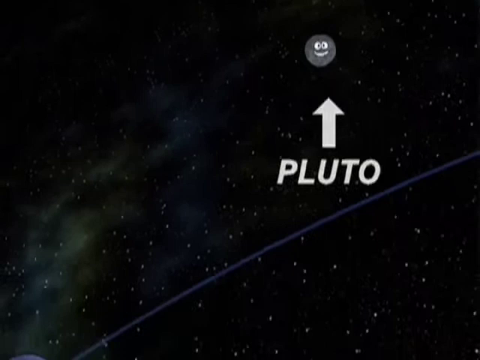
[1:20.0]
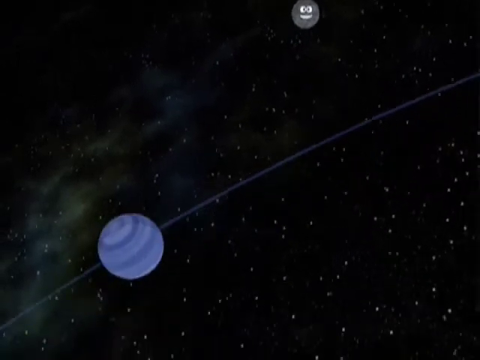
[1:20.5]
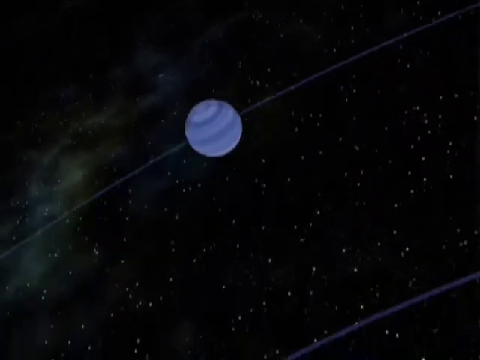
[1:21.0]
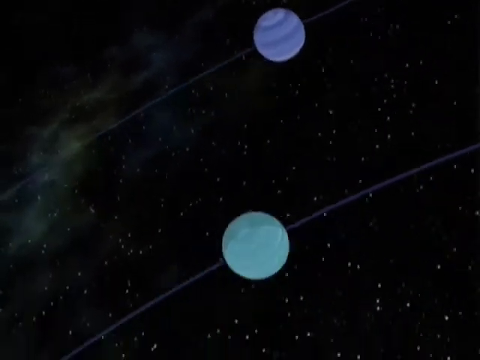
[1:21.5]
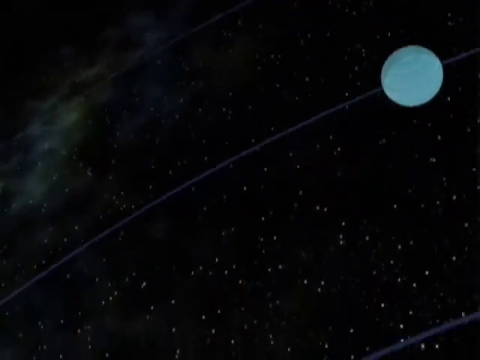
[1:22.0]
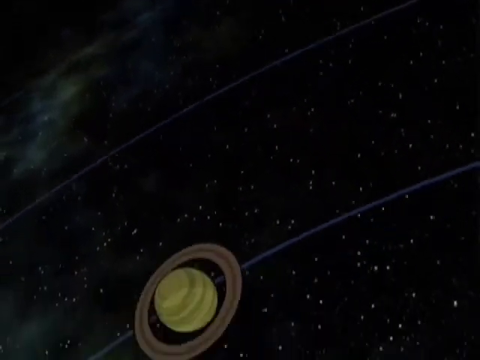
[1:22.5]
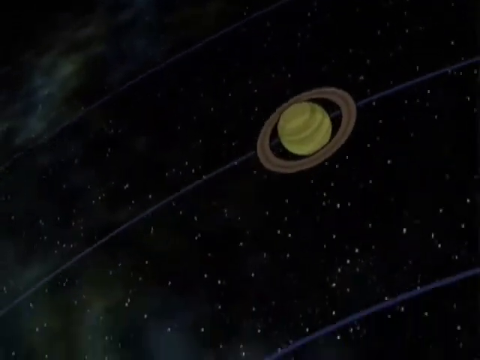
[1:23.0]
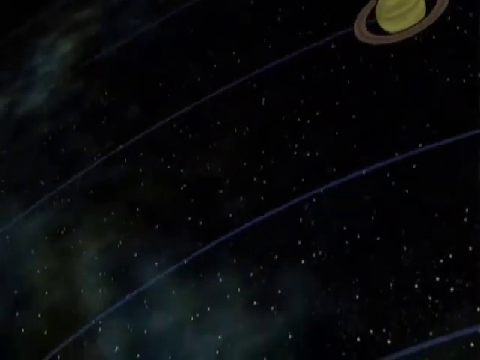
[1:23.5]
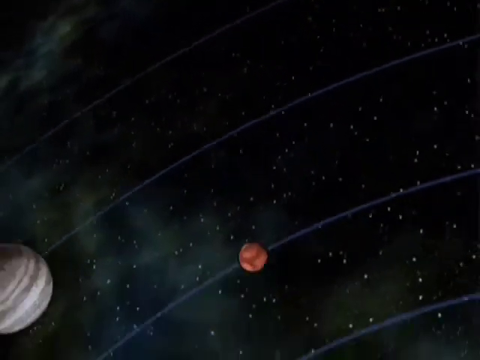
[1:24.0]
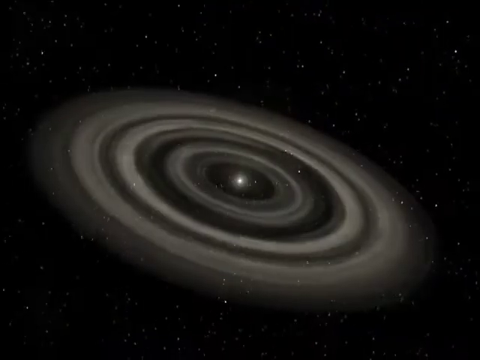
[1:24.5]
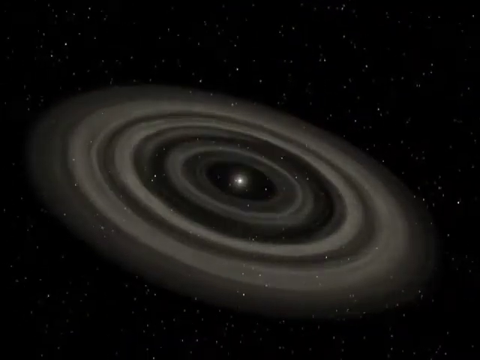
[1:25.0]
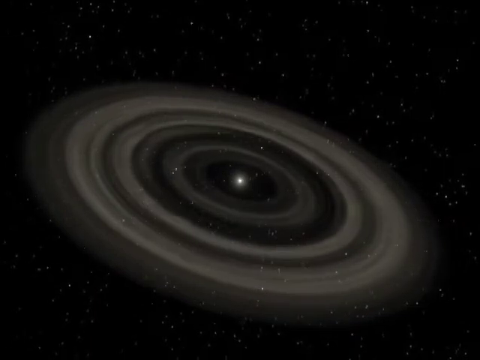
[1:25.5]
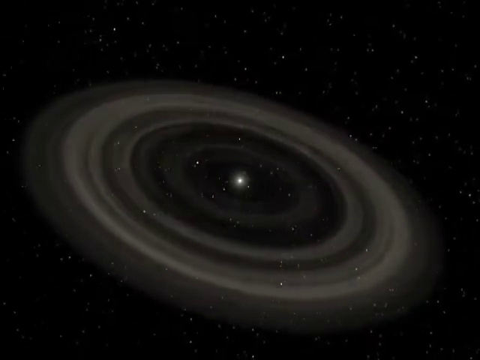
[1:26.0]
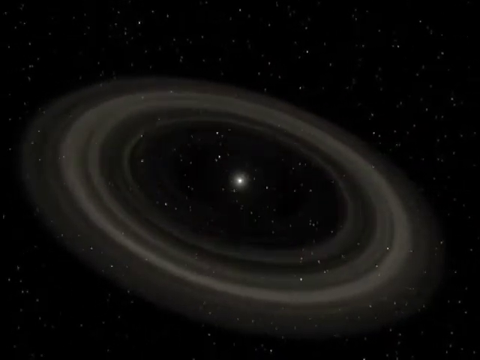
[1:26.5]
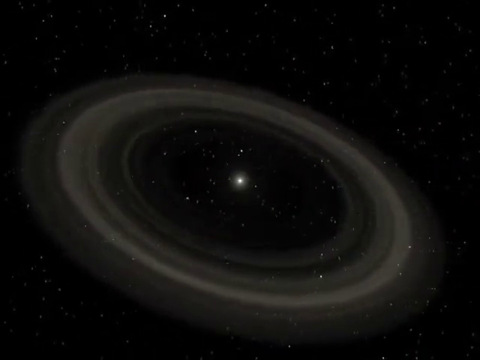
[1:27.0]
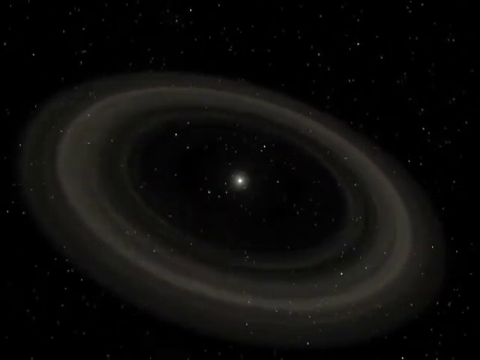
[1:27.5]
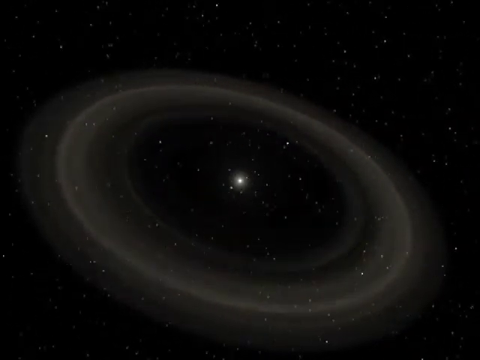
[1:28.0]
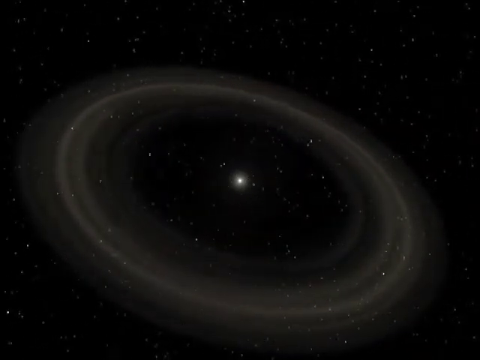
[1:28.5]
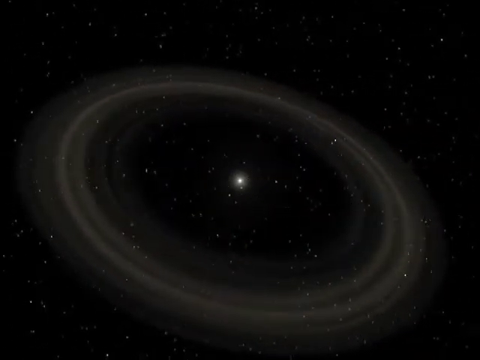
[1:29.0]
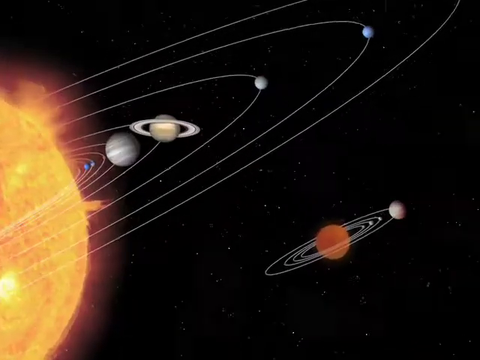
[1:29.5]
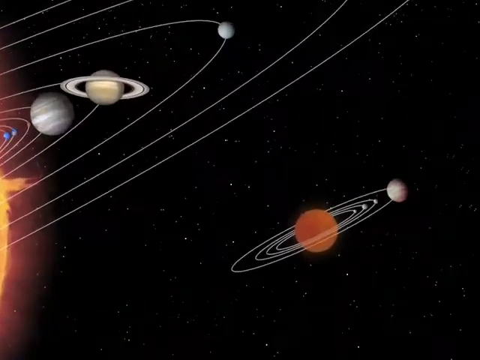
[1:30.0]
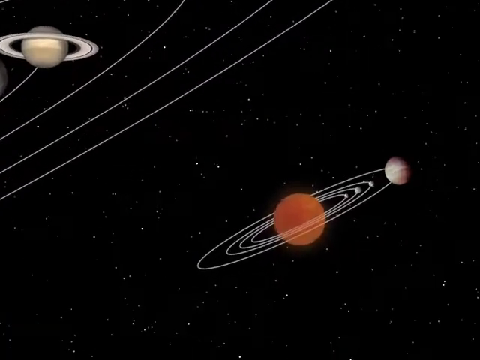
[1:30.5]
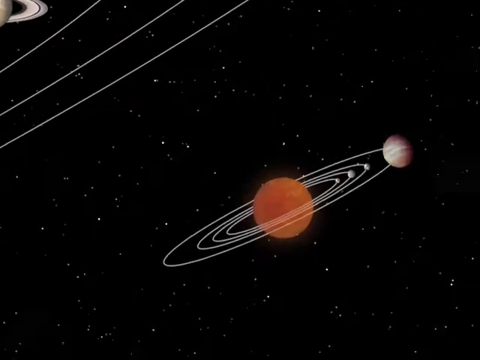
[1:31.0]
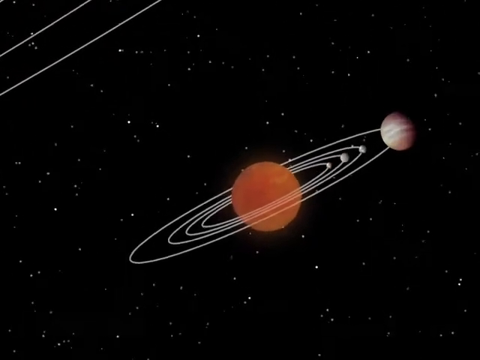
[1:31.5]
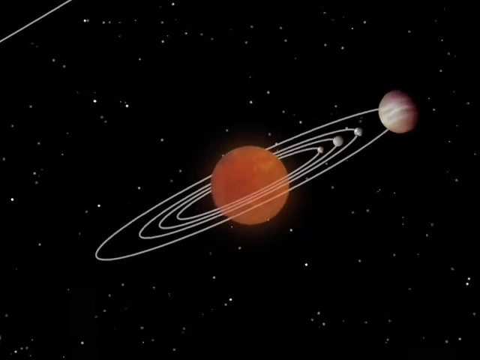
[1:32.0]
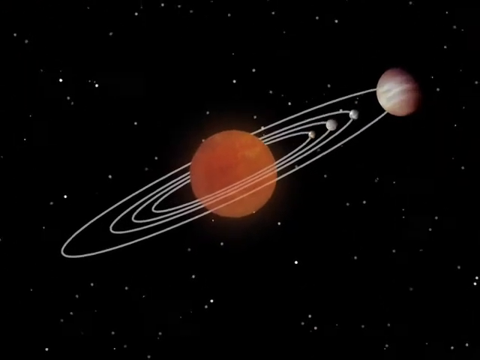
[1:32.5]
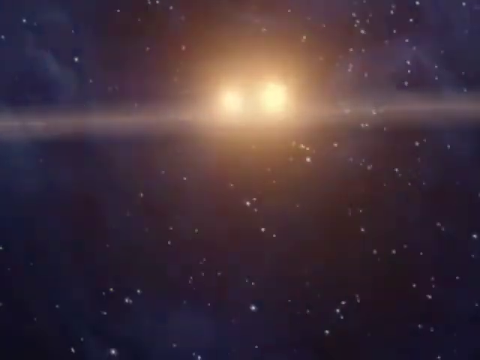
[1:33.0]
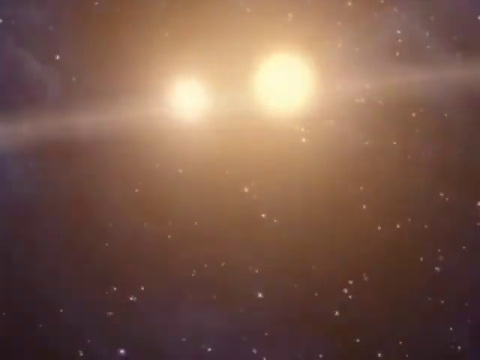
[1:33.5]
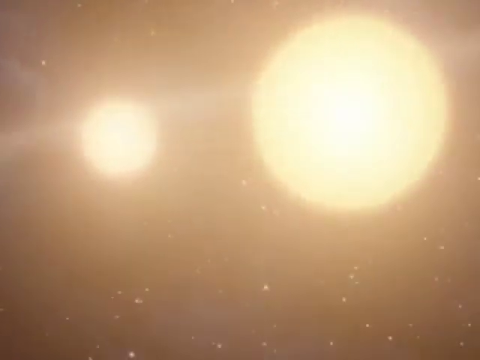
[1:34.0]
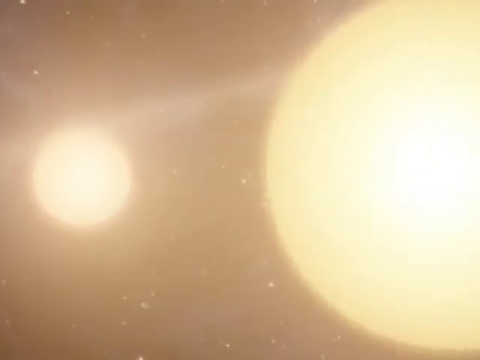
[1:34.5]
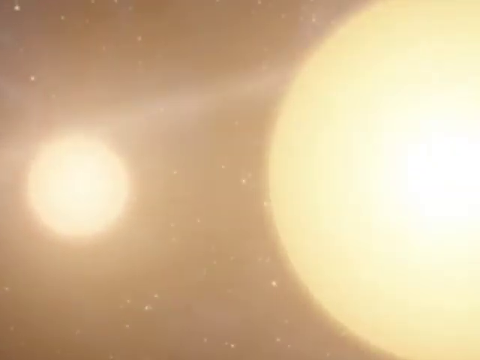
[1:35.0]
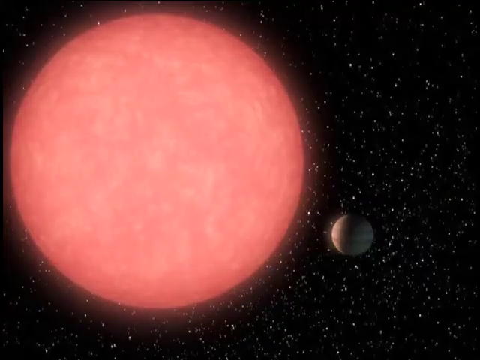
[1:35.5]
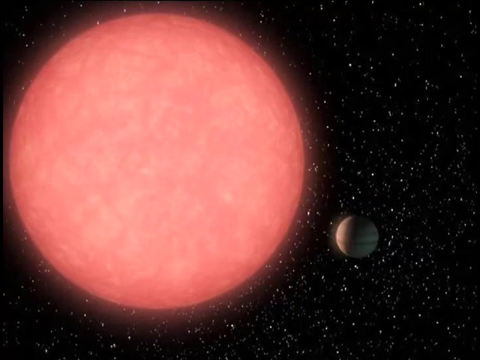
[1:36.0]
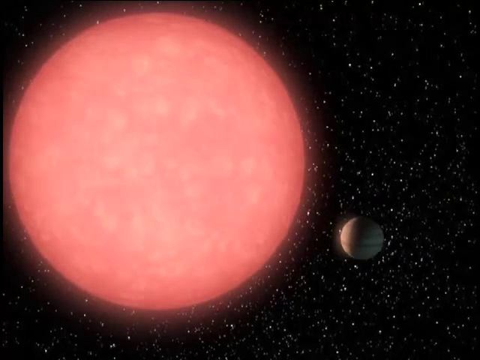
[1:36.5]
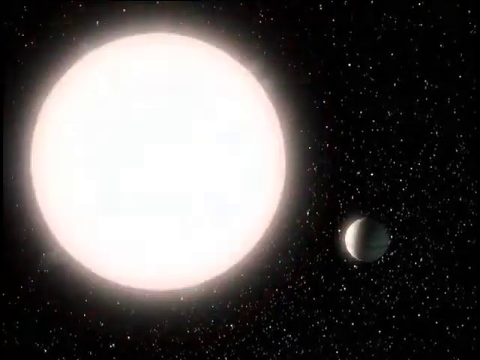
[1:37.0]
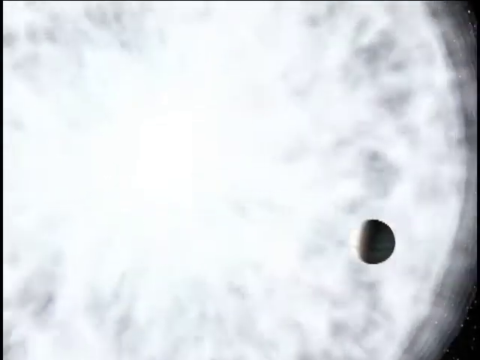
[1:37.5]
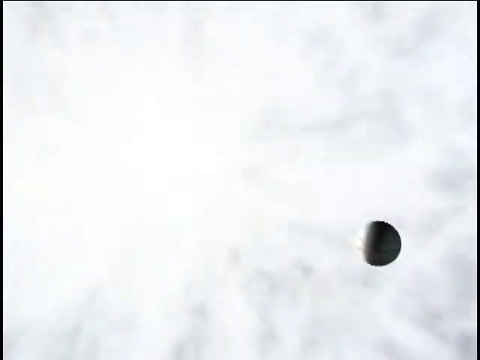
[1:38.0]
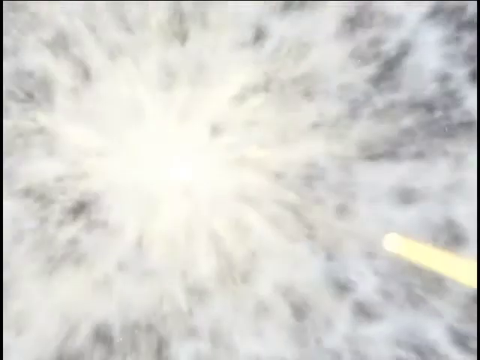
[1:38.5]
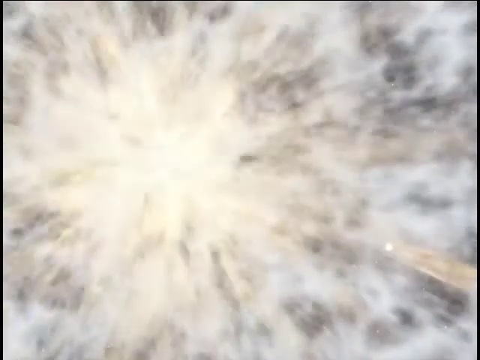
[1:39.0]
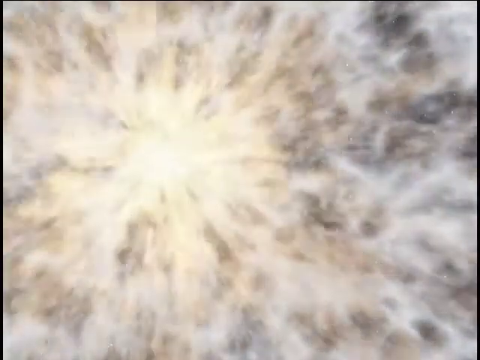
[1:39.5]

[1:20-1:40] The video shows Pluto, and many planets are shown.